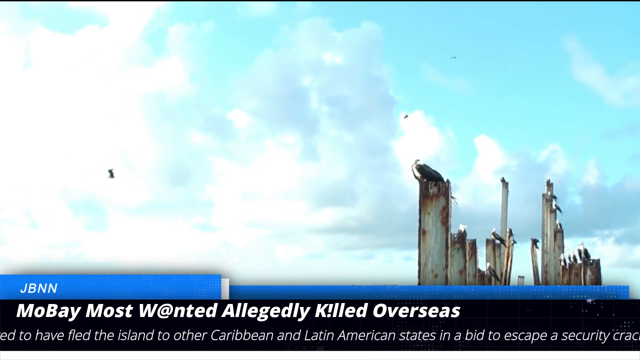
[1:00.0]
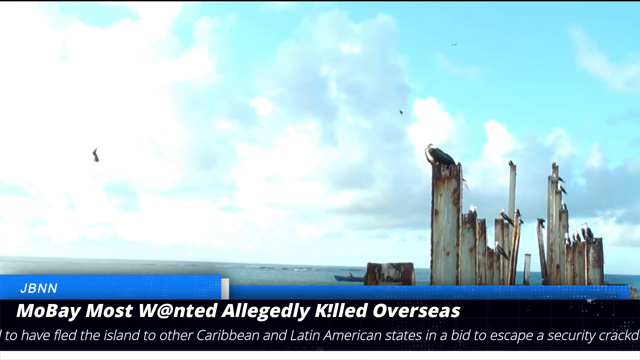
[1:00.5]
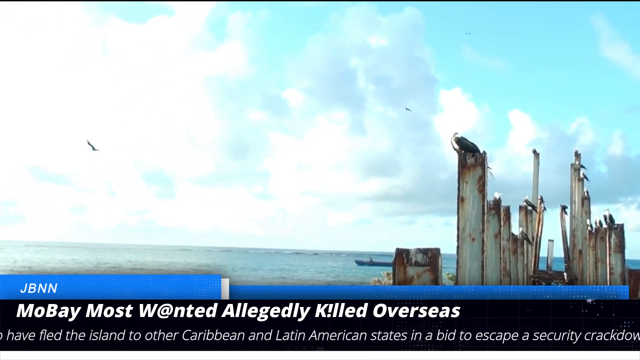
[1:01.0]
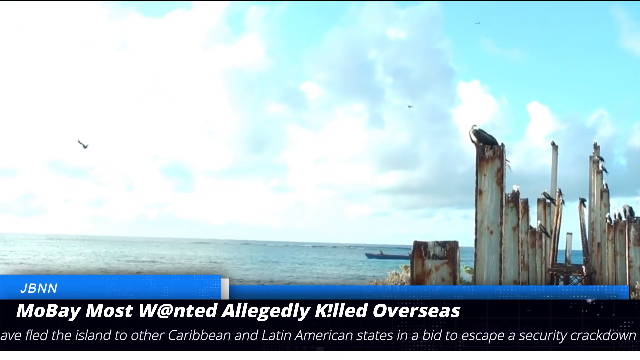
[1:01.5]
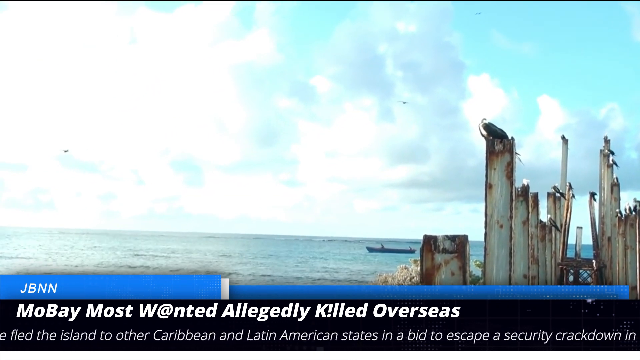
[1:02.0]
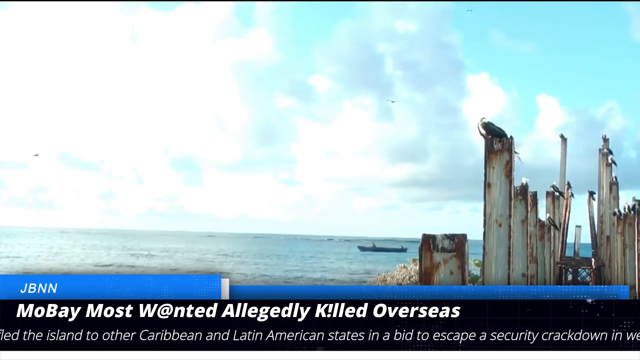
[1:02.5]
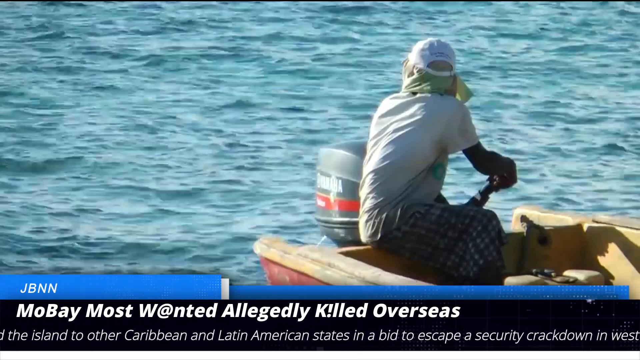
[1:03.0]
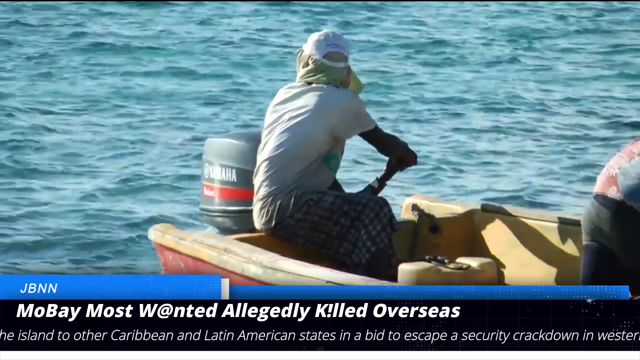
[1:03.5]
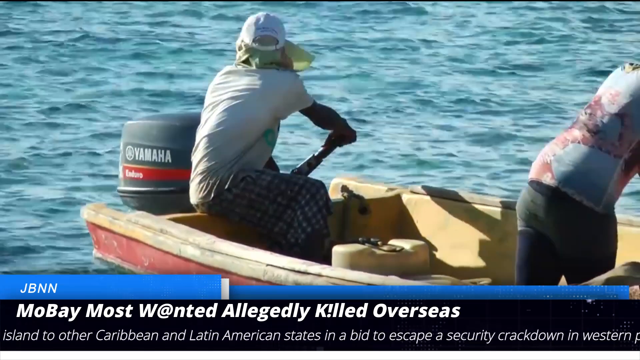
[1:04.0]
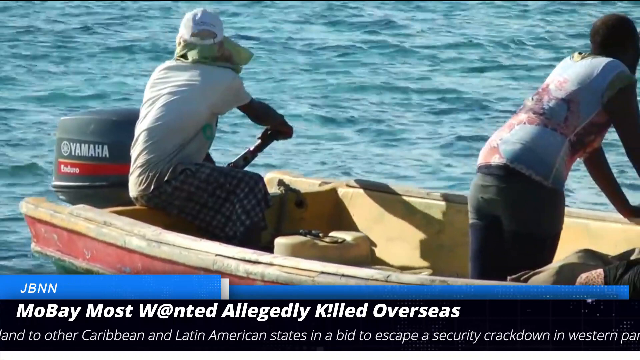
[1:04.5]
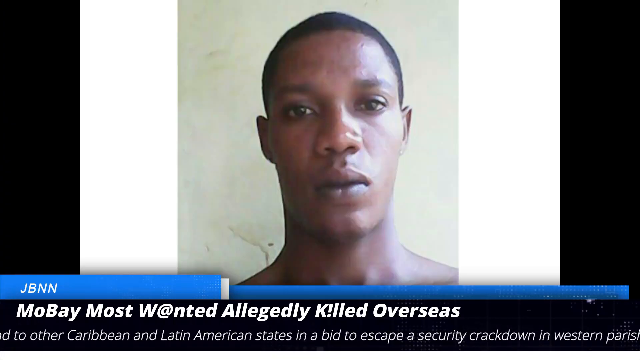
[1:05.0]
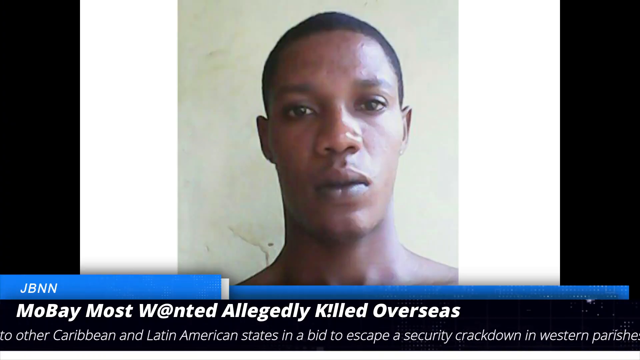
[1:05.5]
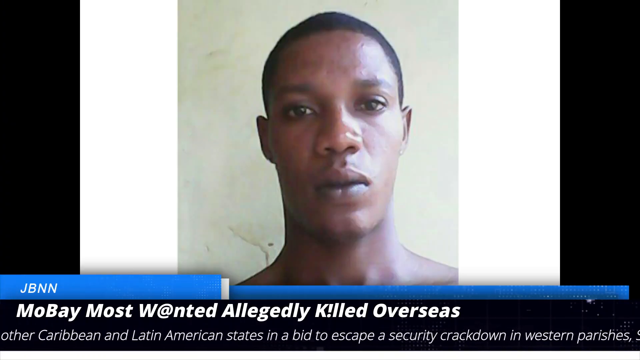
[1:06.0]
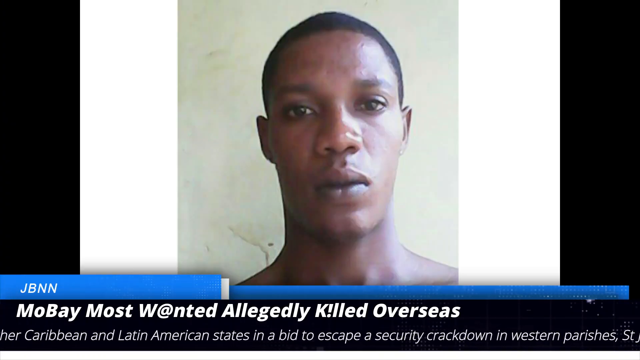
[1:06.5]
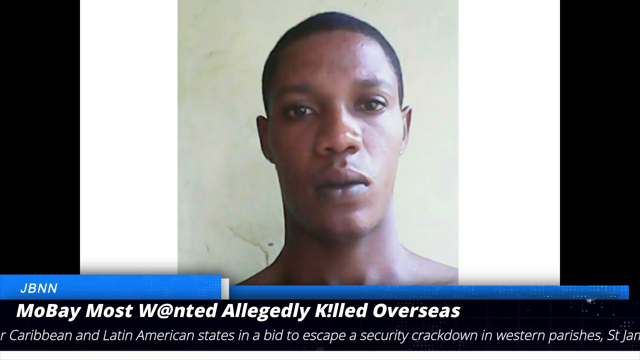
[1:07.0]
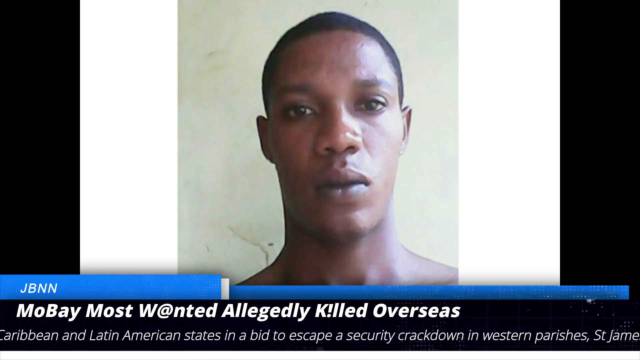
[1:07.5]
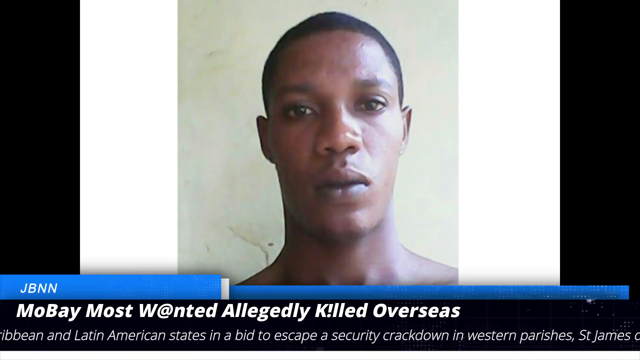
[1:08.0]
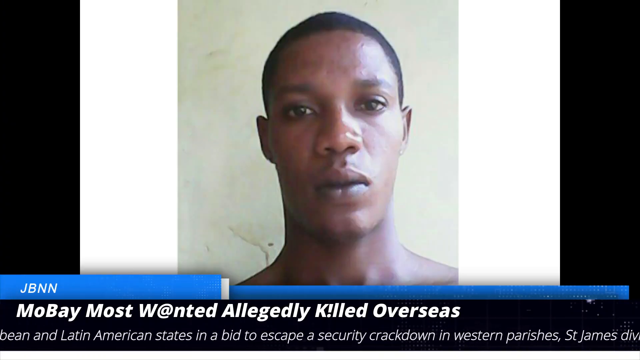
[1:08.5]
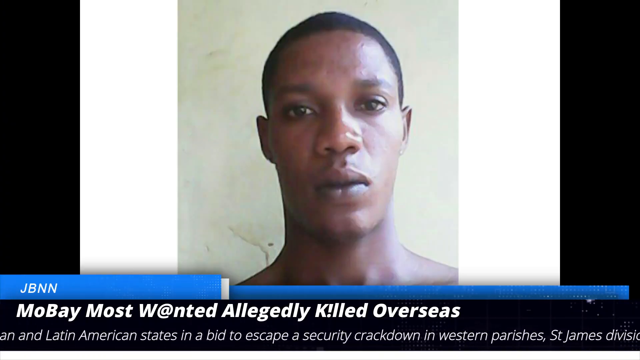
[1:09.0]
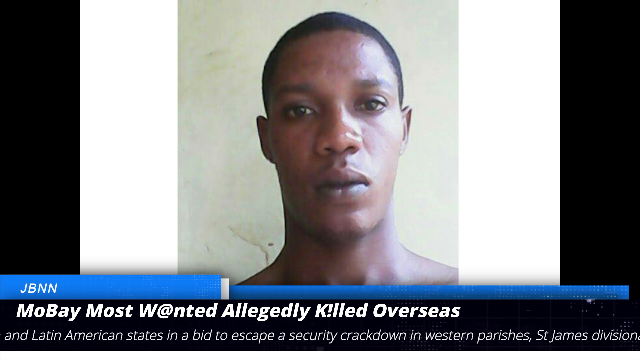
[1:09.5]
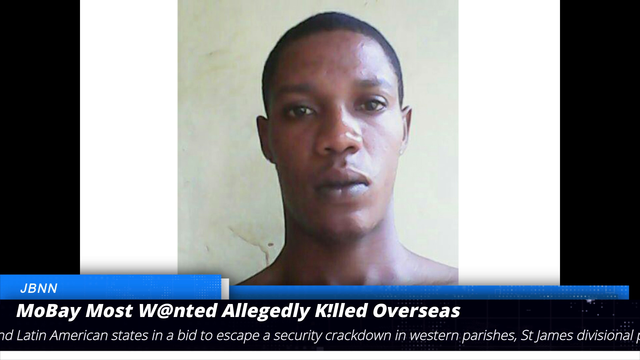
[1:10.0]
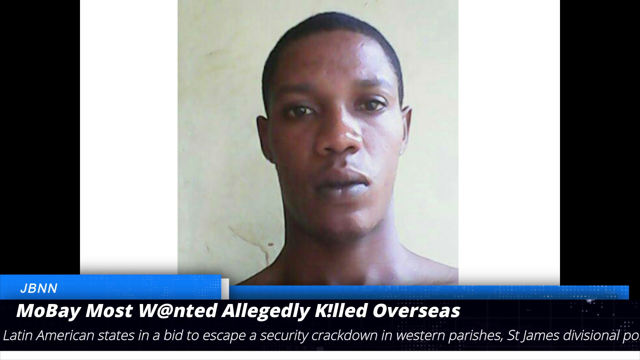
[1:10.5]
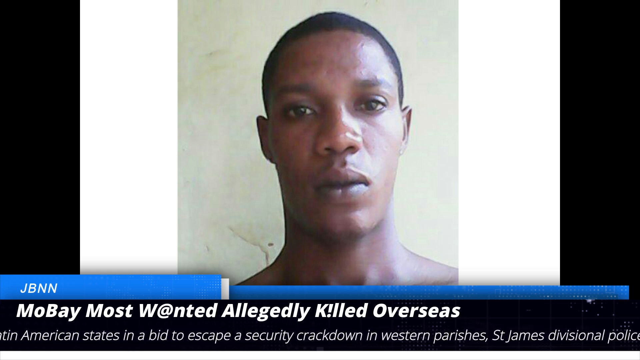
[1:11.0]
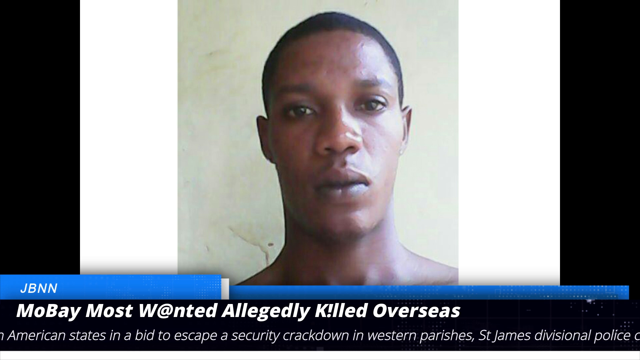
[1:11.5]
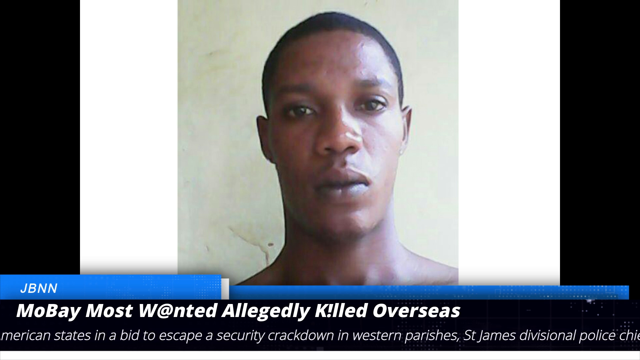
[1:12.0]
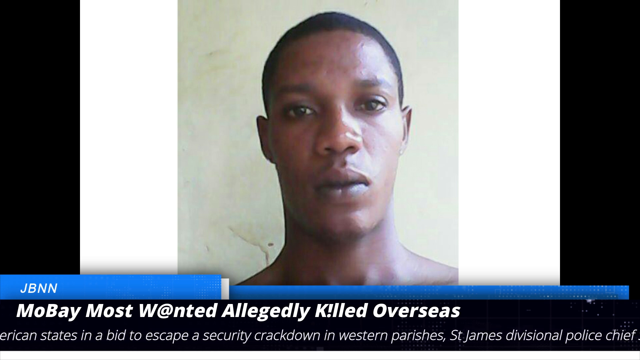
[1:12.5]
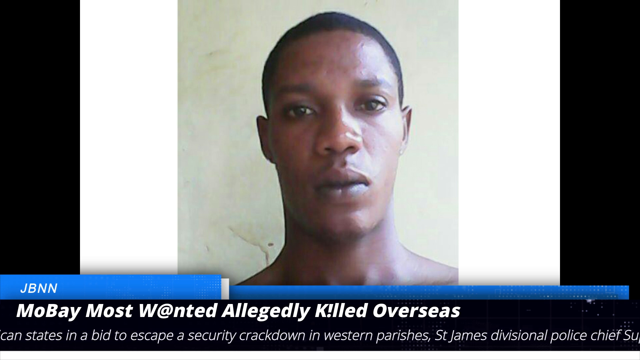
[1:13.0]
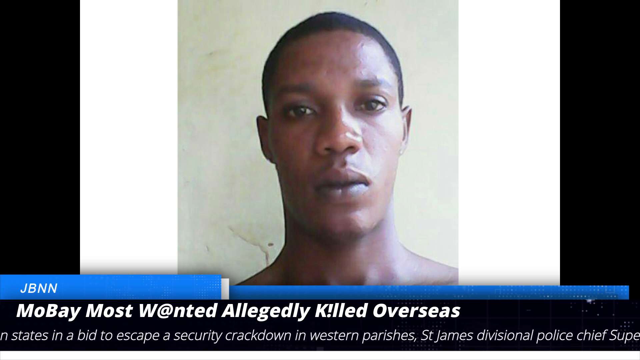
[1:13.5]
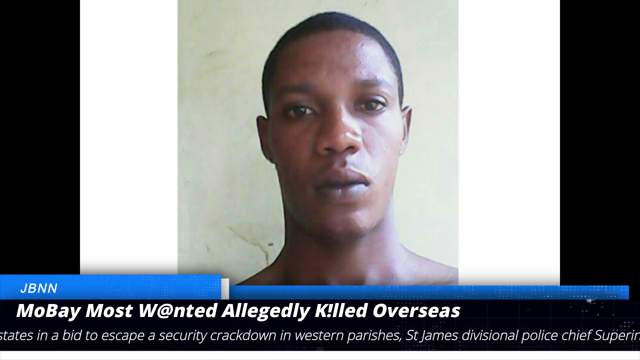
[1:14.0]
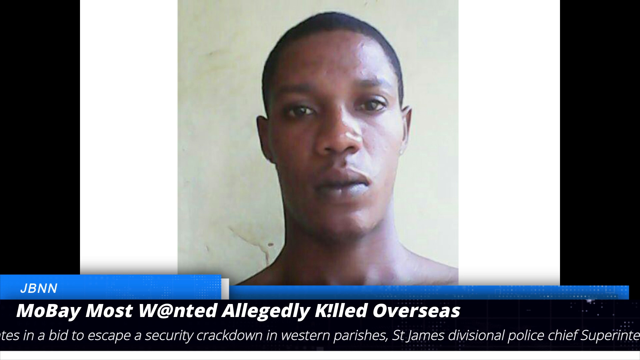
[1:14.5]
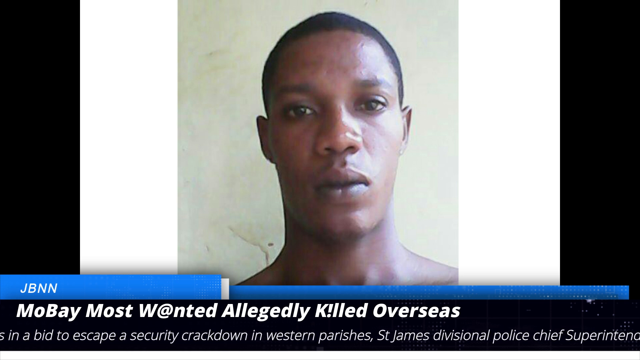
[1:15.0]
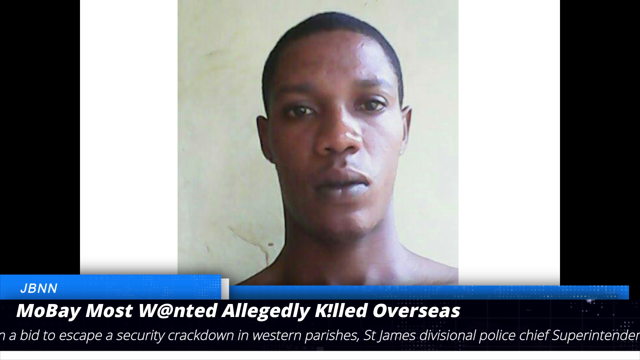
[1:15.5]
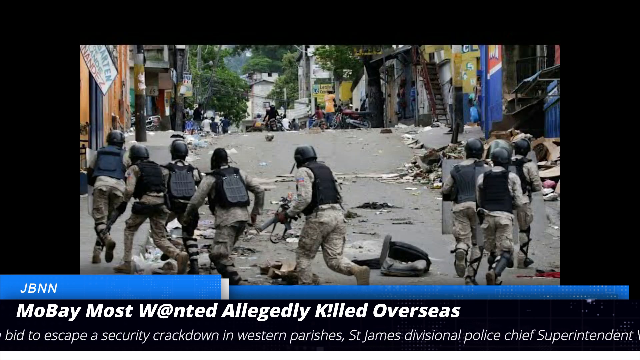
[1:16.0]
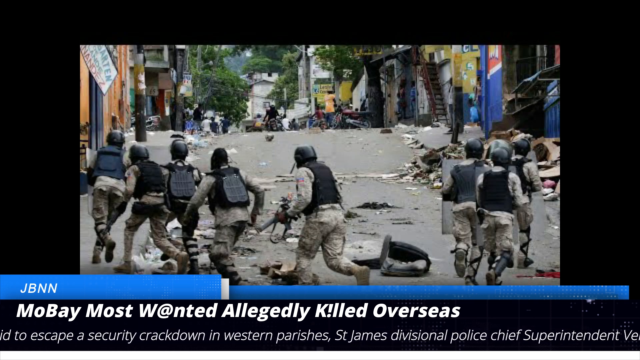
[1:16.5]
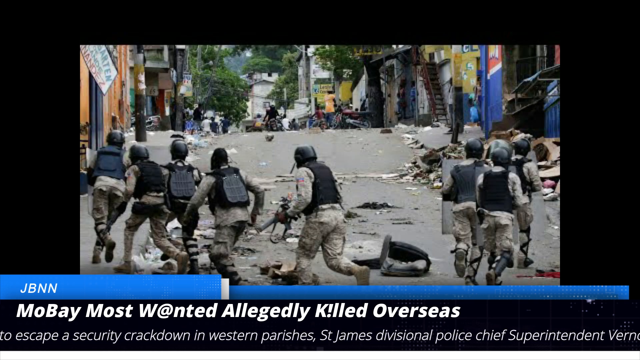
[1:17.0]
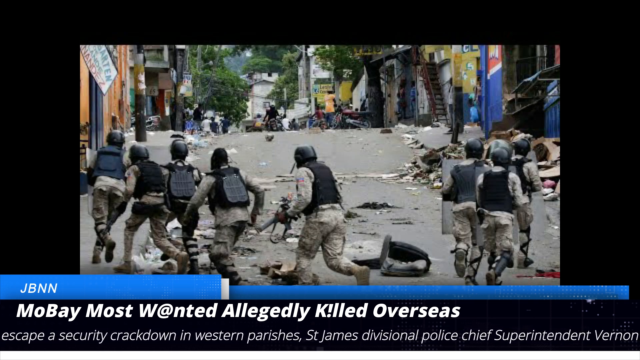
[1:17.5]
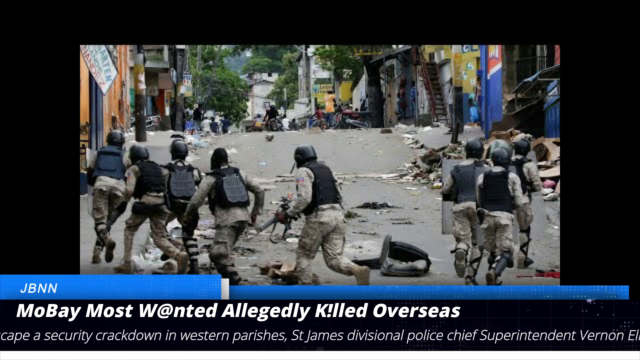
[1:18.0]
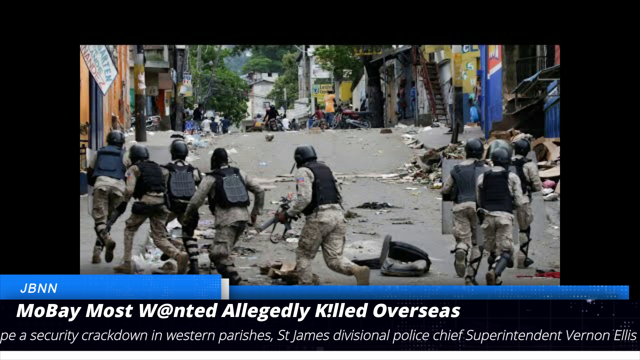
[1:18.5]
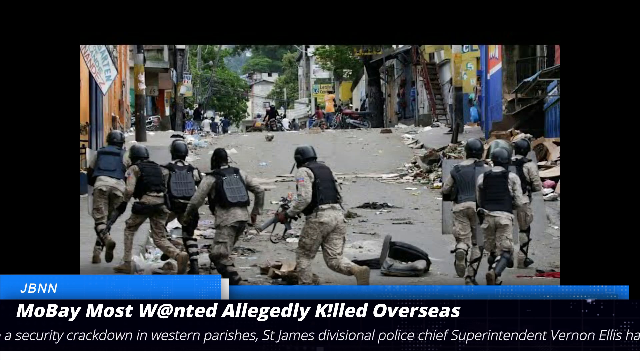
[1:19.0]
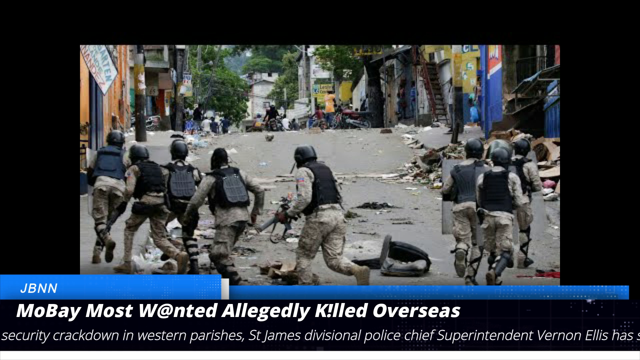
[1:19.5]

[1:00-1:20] On a cloudy day, clouds fill around 75% of the top of the image, with water in the bottom portion. A very small boat just right of center sits at the top of the water line in silhouette, a black outline filled in with black, going from left to right. Closer to the camera are tall stalks, either bamboo or pieces of an old burned-down fence: vertical planks rising into the air, roughly off-white in colour. Text at the bottom reads "Wanted Allegedly Killed Overseas". The video then zooms in on what may be that boat: it is red with wood-coloured trim and has a Yamaha engine on the back left. Two people are on it, a person on the left who is sitting and a person on the right looking away from the camera over the edge of the boat into the distance.